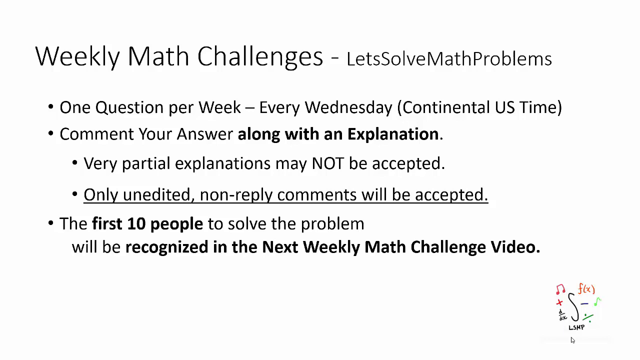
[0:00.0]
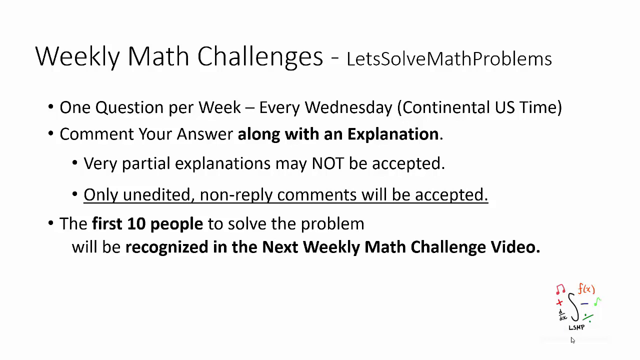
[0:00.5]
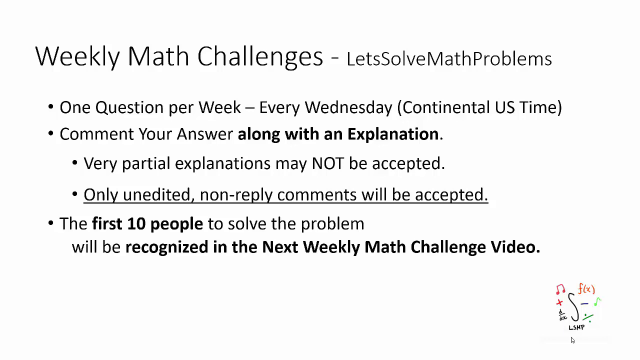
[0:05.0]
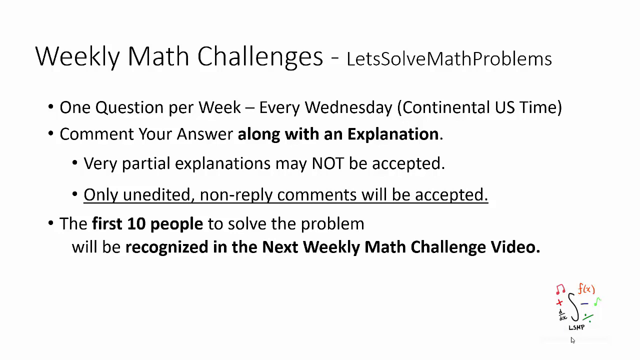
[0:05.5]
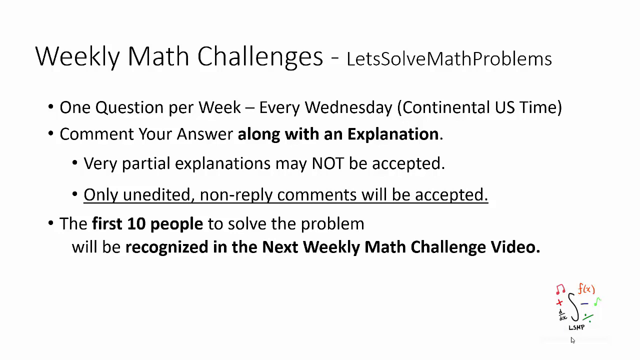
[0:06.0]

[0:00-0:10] Text on the screen reads "weekly math challenges, let's solve math problems. One question per week every Wednesday" (continental US time). It continues: "Comment your answer along with explanation. Very partial explanation may not be accepted." It also states that only unedited non-reply comments will be accepted and that "the first 10 people to solve the problem will be recognized in the next weekly math challenge video."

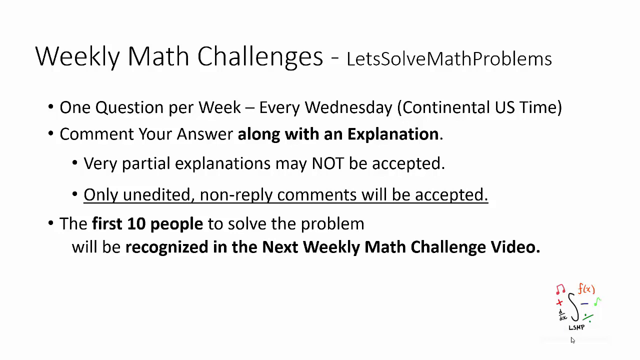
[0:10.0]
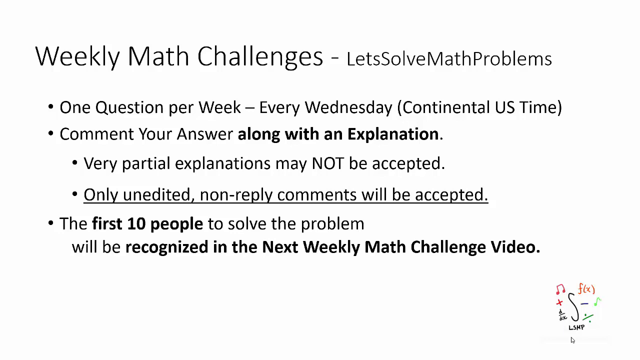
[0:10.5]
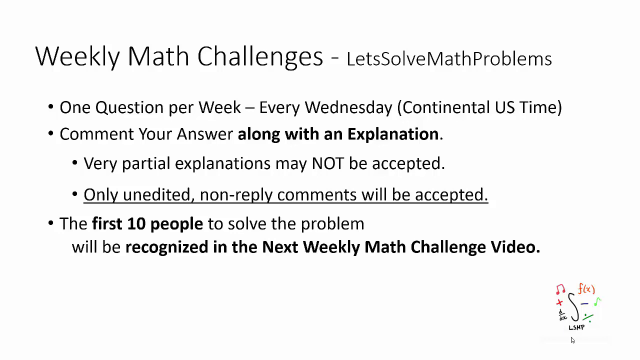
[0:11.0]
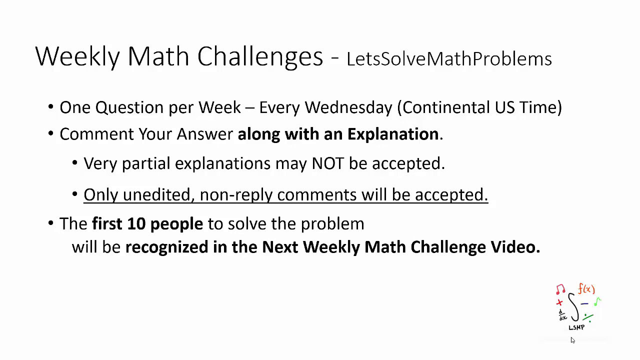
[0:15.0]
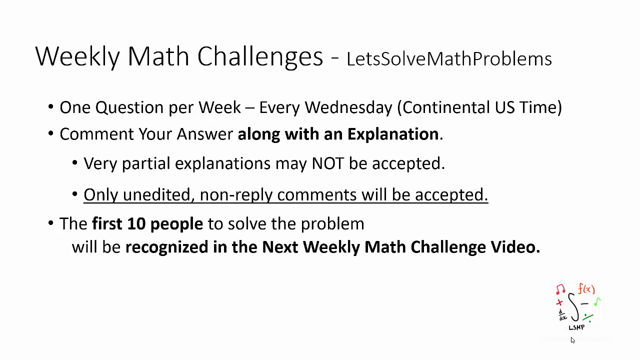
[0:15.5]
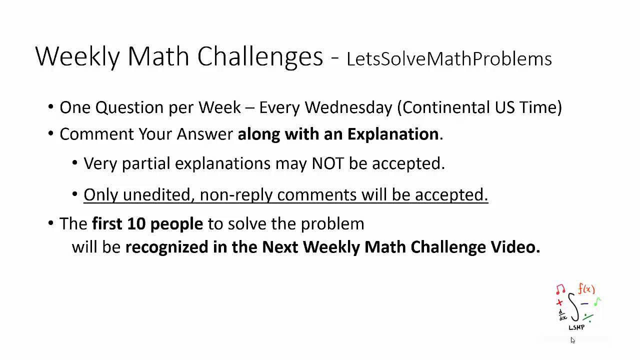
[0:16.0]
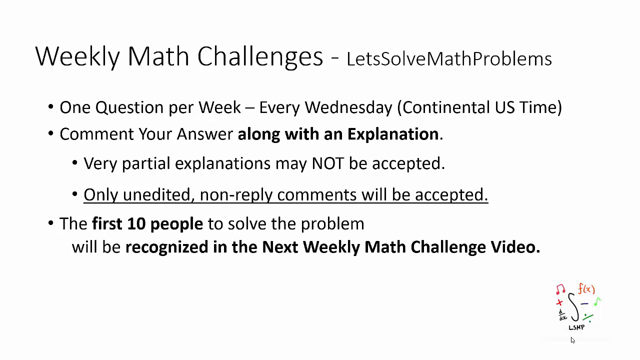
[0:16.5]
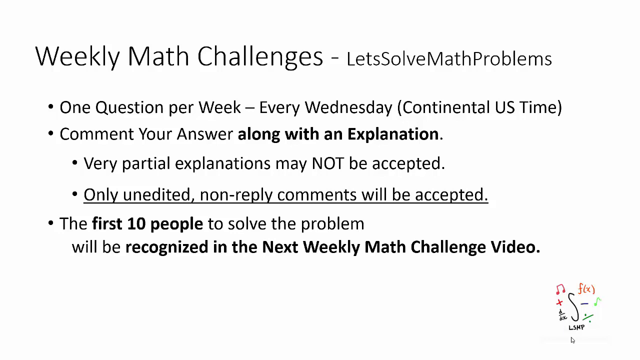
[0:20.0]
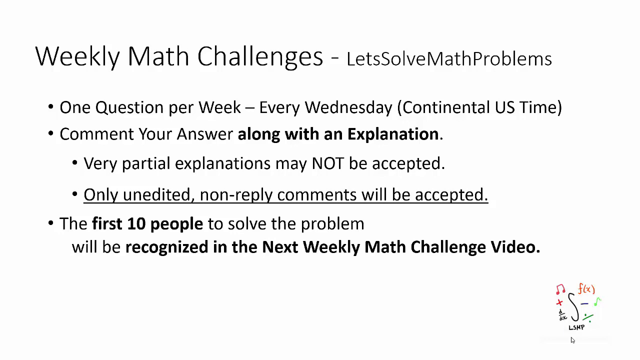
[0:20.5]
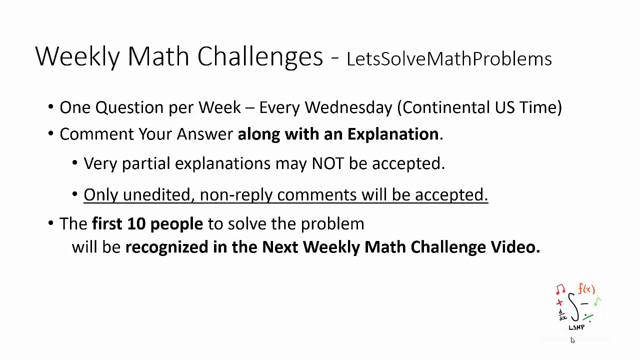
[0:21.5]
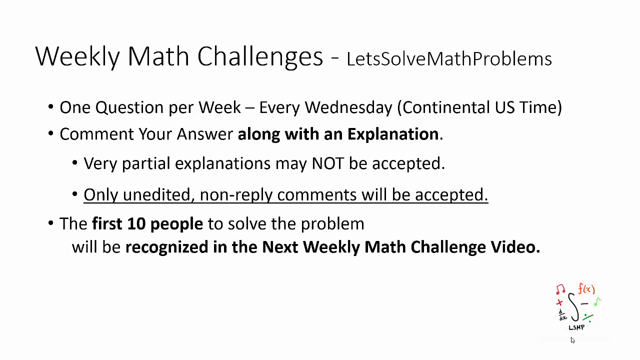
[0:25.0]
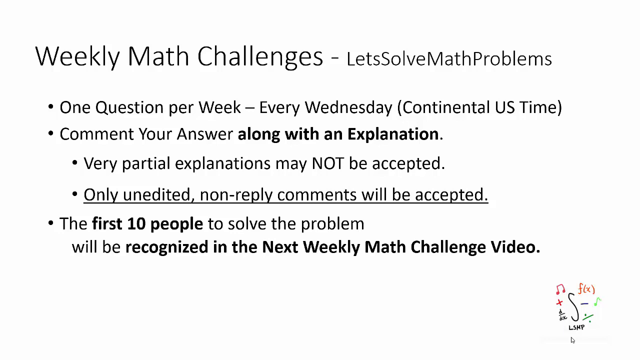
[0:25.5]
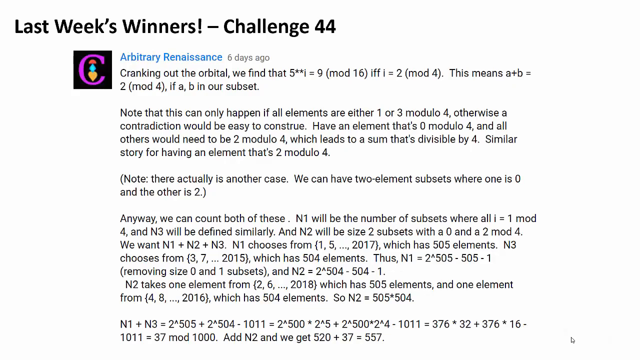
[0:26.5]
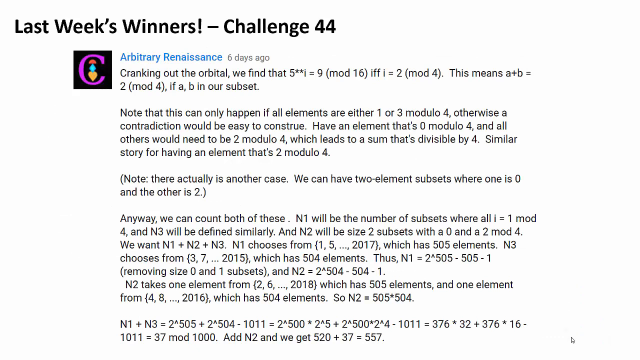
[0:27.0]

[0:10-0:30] The weekly math challenge text appears: "let's solve math problems. One question per week, every Wednesday, Continental US time. Comment your answers along with explanation. Very partial explanation will not be accepted. Only unedited non-reply comments will be accepted. The first 10 people to solve the problem will be recognized in the next weekly math challenge video." It is the same screen as before, but with a few things changed and edited. A new element appears showing last week's winners for challenge 44, along with text reading "Note that this can only happen if all elements are either one or three".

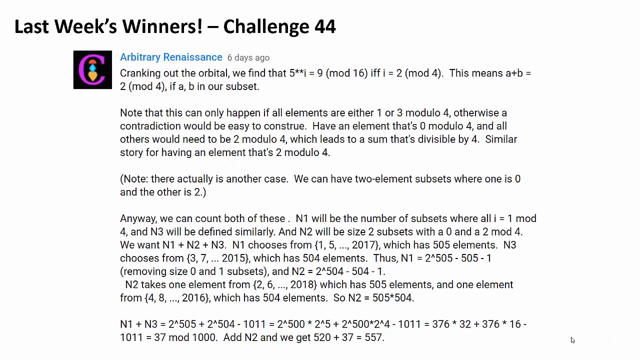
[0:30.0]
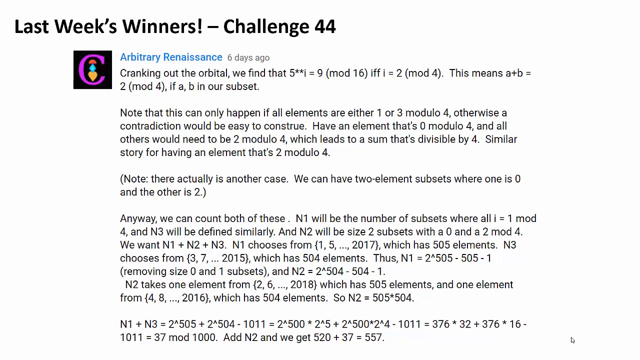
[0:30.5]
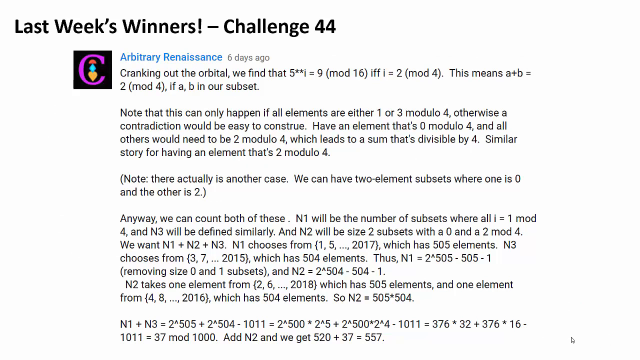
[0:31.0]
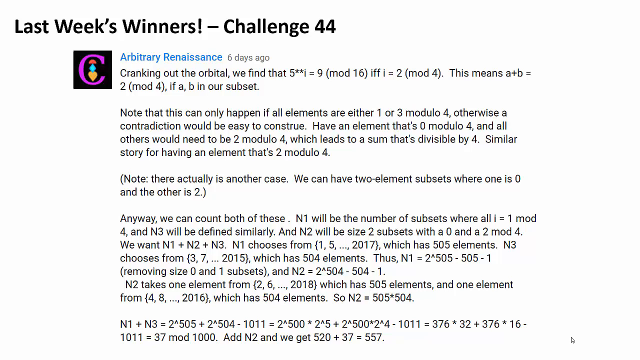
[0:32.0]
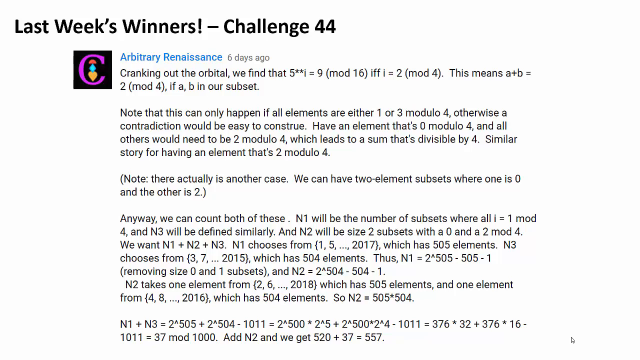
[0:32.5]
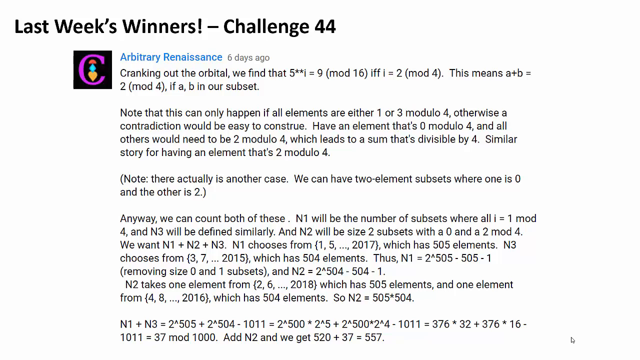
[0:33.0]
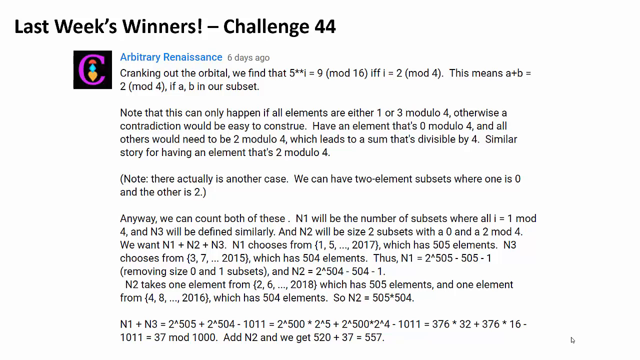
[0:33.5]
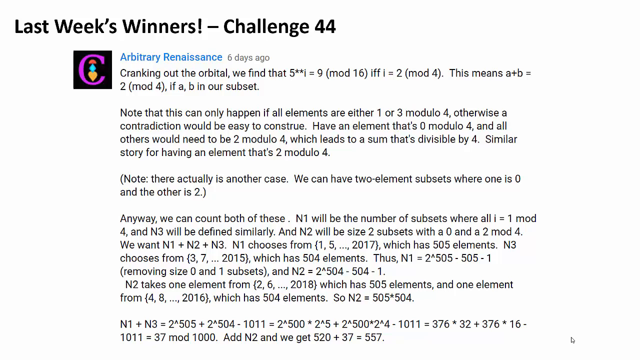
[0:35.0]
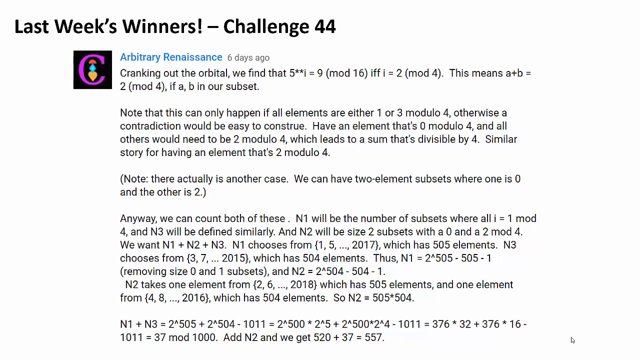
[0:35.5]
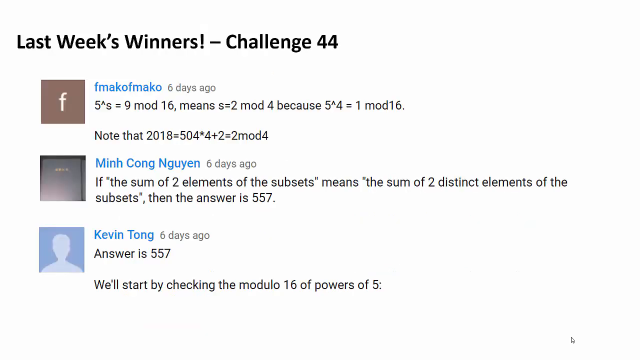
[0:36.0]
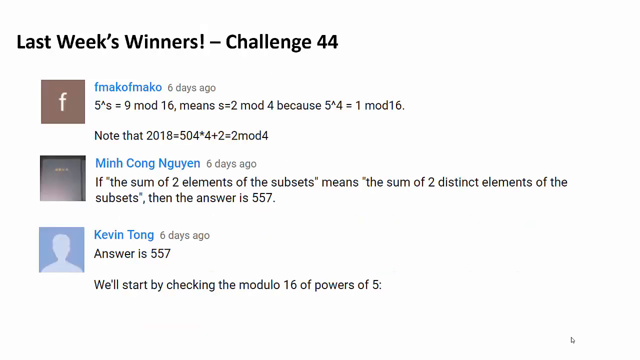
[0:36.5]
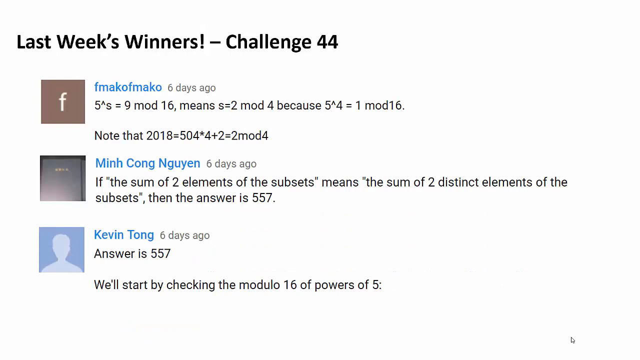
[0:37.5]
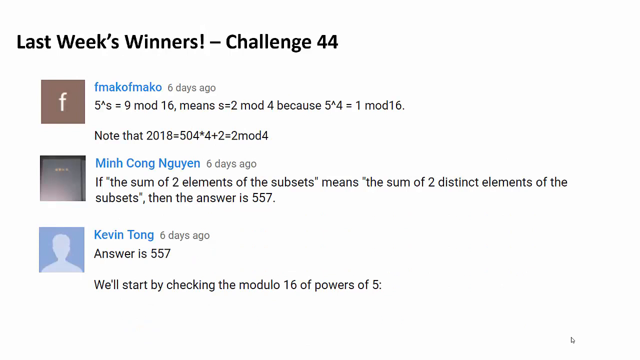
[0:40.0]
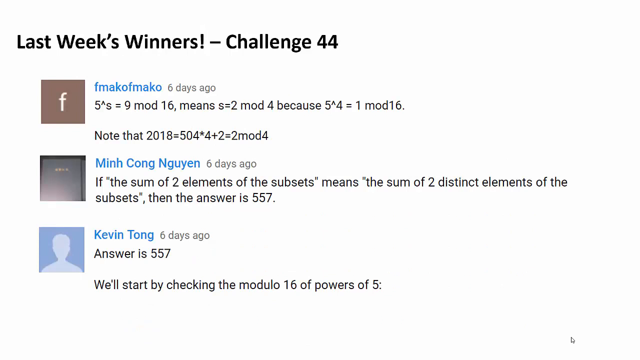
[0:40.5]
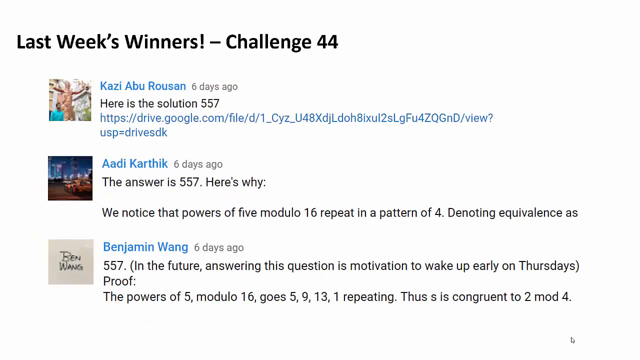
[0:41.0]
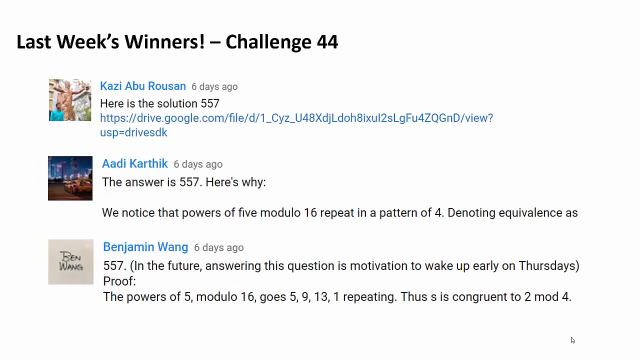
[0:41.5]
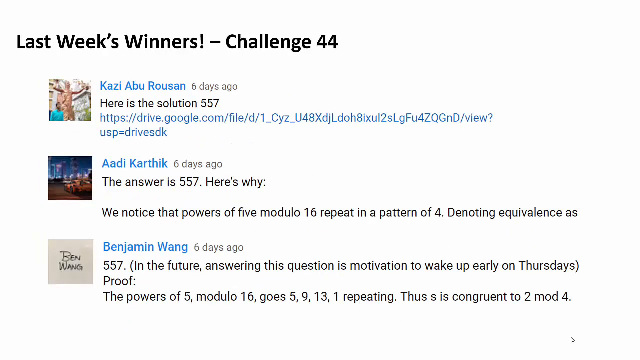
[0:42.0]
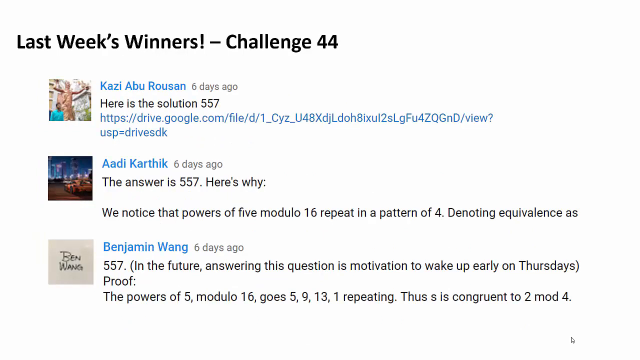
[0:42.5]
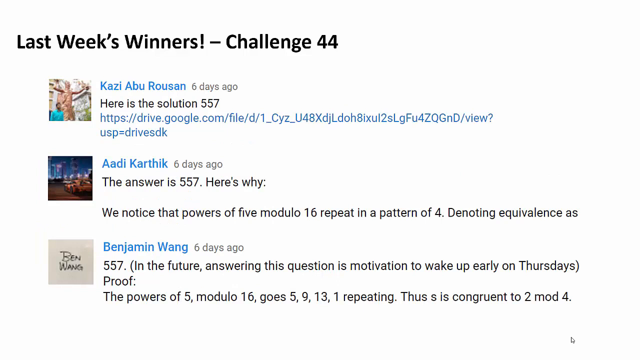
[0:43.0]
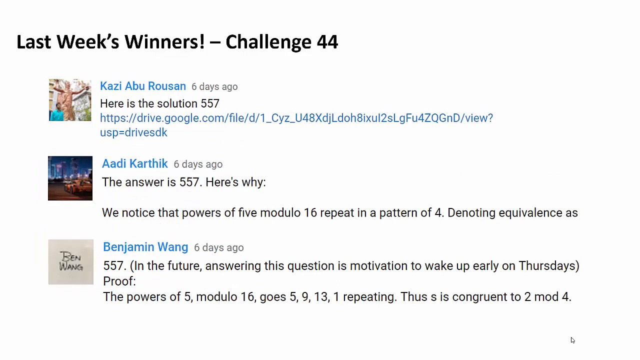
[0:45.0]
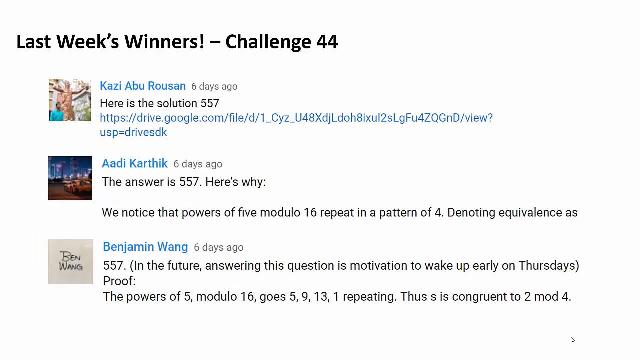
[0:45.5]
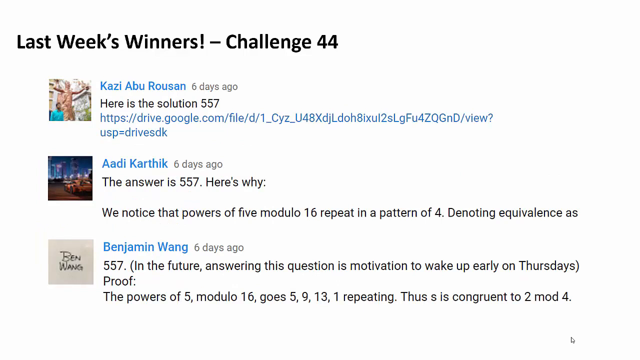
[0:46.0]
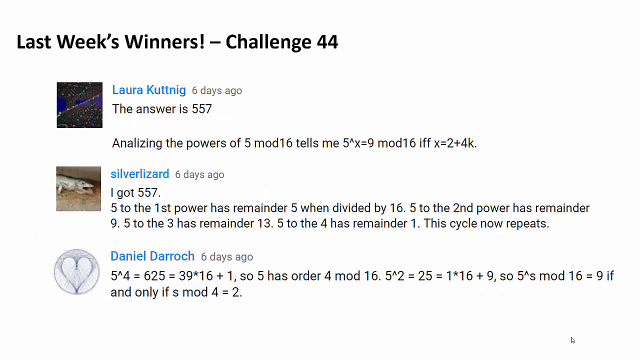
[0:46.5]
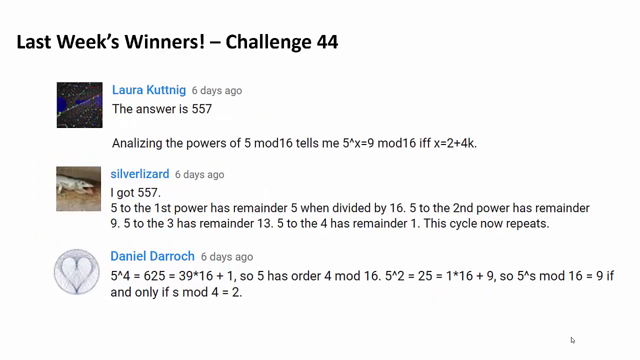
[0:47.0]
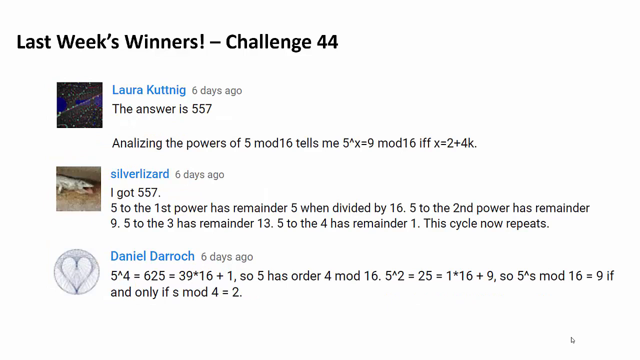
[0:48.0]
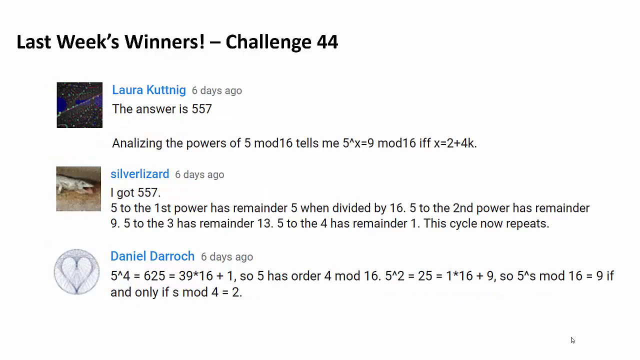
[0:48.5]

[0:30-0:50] The screen shows last week's winners for challenge 44, with solutions posted as comments, one marked "6 days ago". Lines read "here is the solution" and "the answer is 557", and another says "I got 557". Text also mentions analyzing the power of 5 and starting by checking the module 16 of powers of 5.